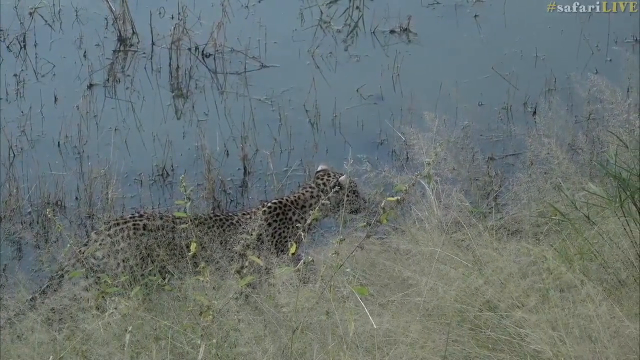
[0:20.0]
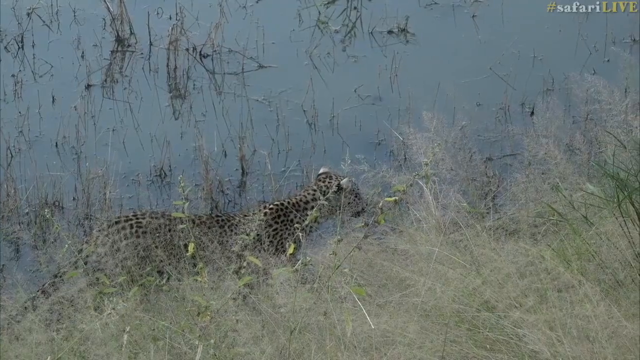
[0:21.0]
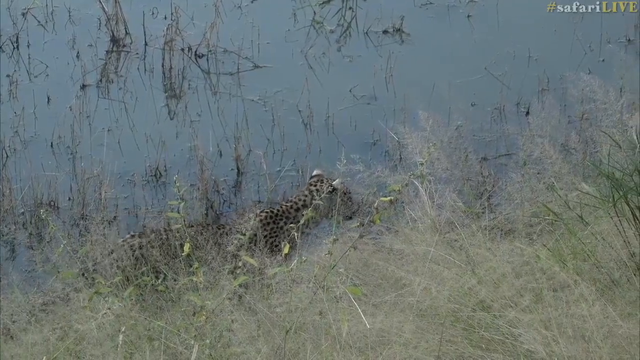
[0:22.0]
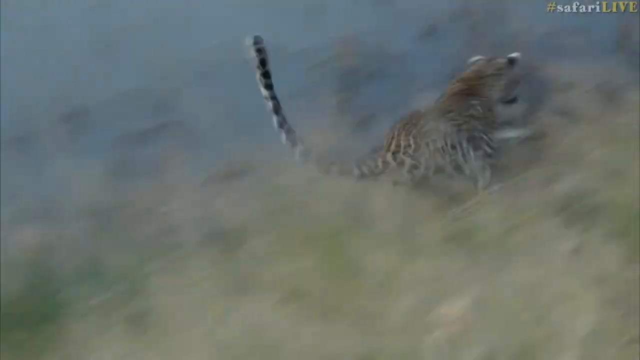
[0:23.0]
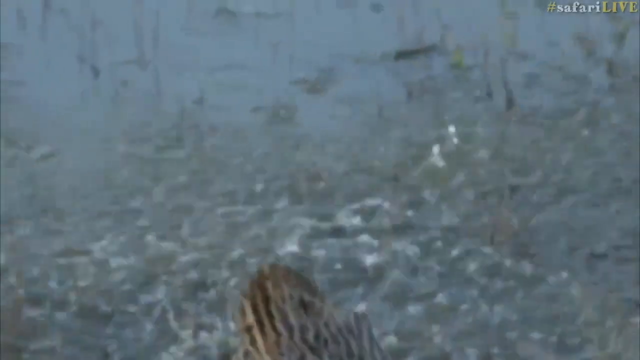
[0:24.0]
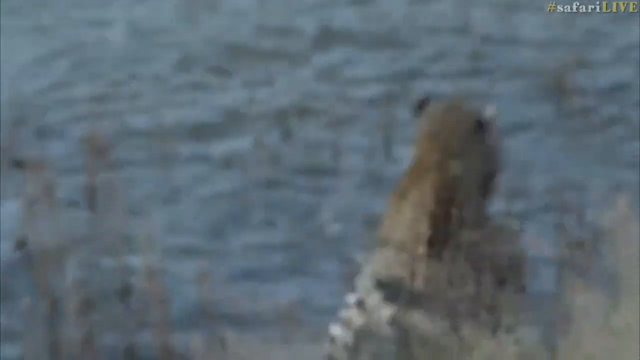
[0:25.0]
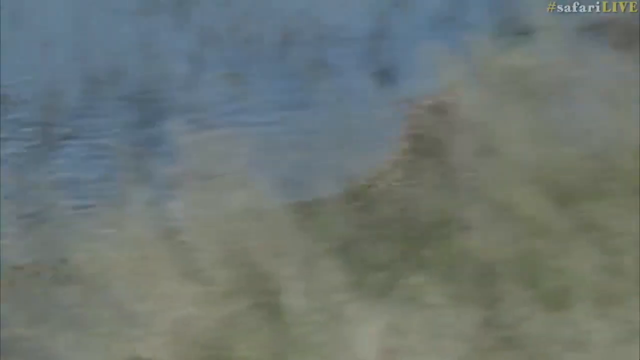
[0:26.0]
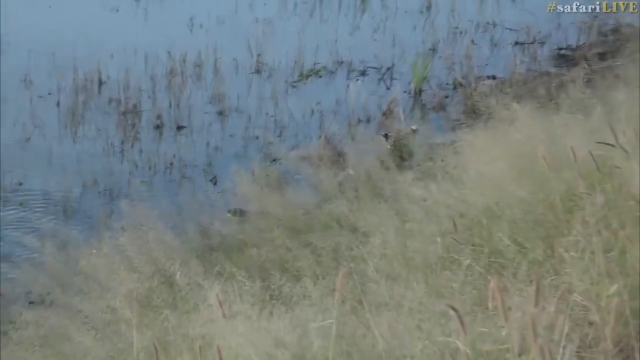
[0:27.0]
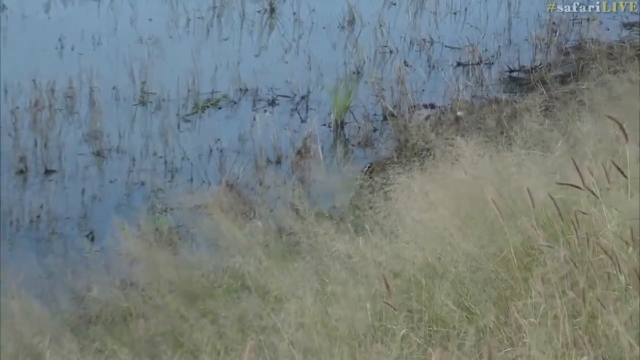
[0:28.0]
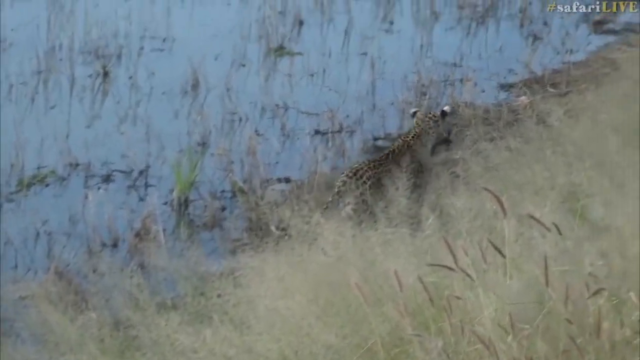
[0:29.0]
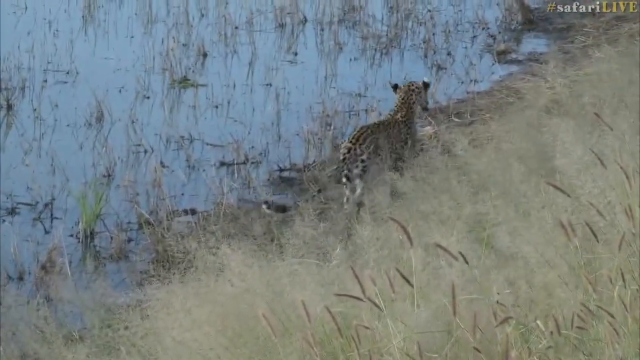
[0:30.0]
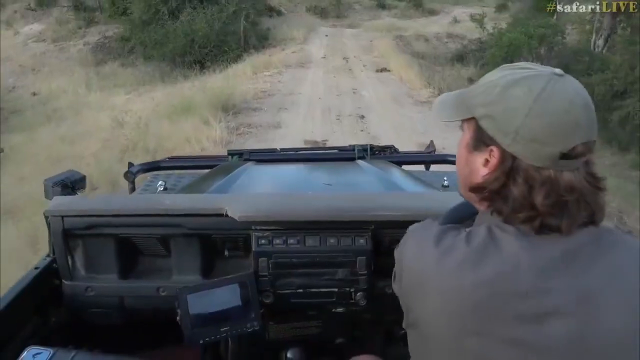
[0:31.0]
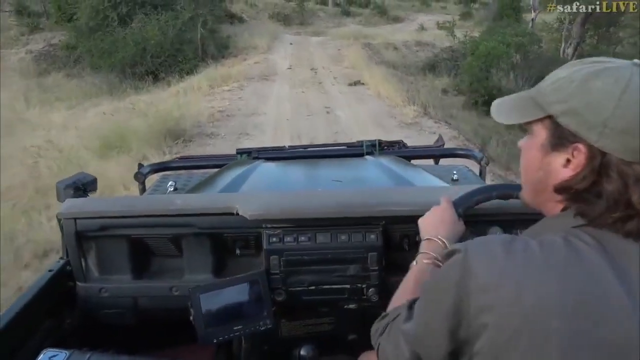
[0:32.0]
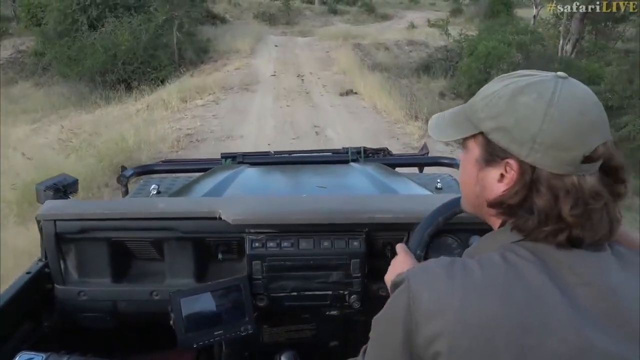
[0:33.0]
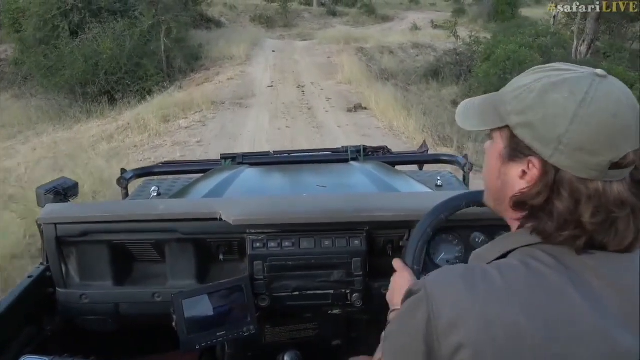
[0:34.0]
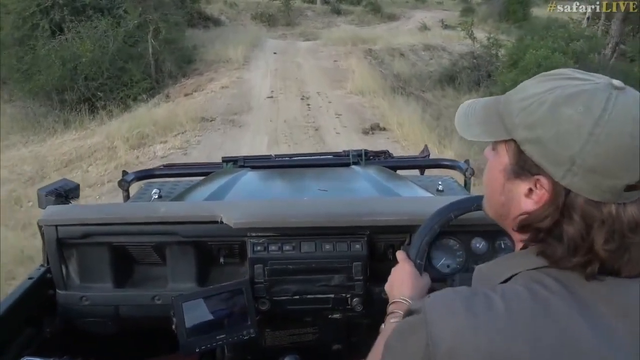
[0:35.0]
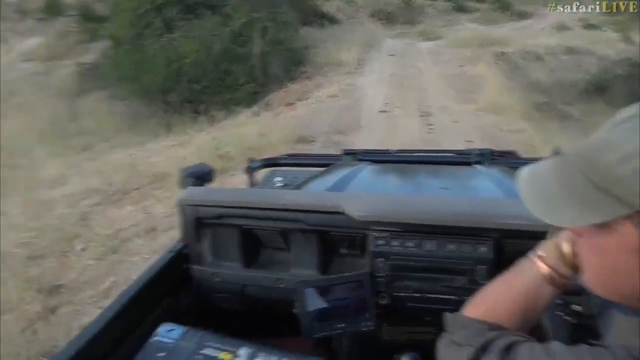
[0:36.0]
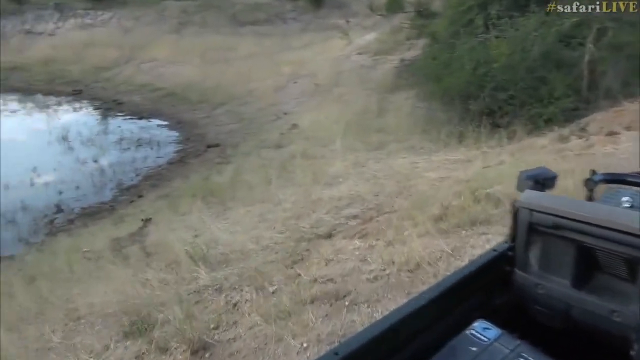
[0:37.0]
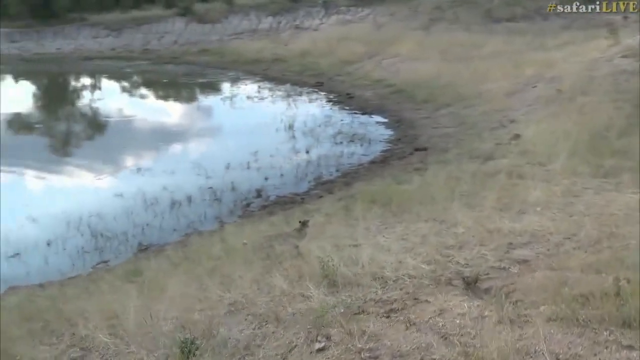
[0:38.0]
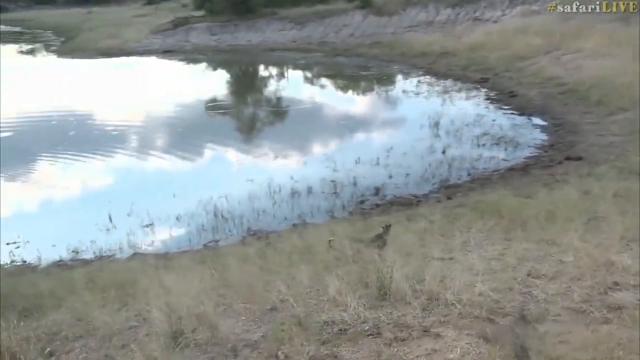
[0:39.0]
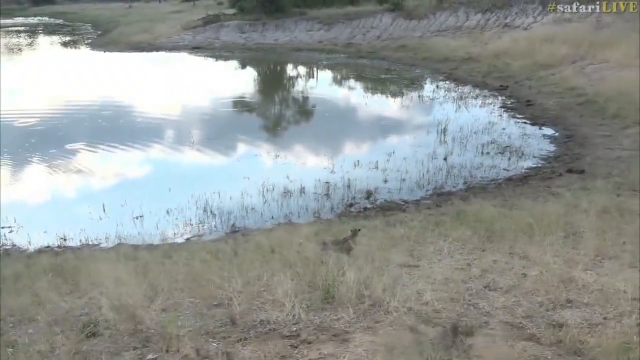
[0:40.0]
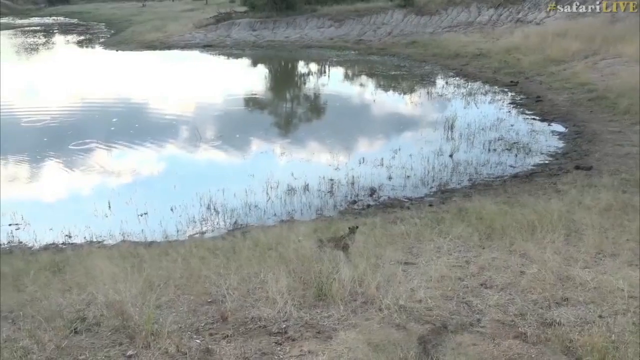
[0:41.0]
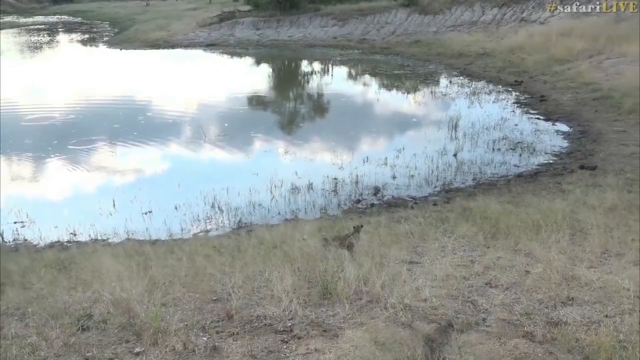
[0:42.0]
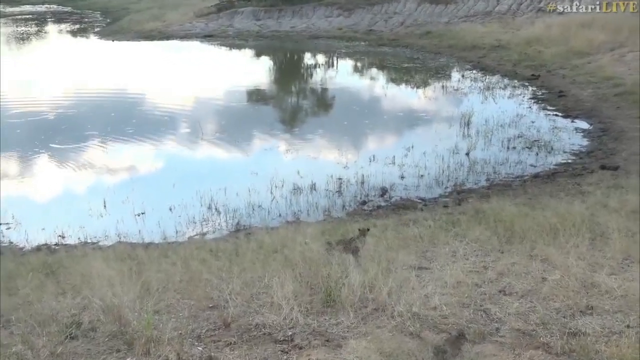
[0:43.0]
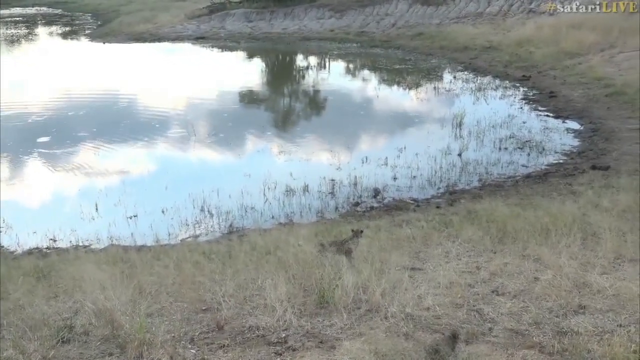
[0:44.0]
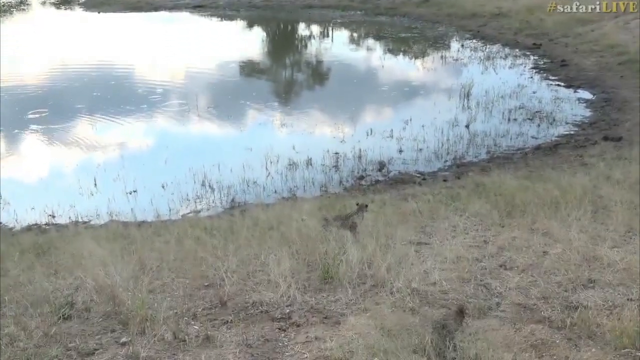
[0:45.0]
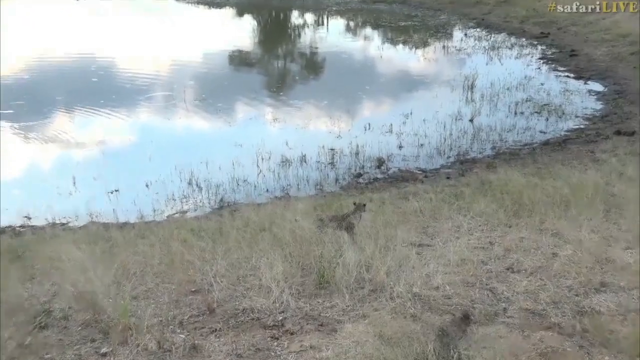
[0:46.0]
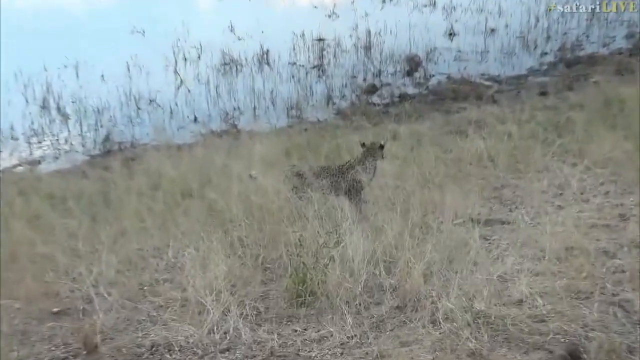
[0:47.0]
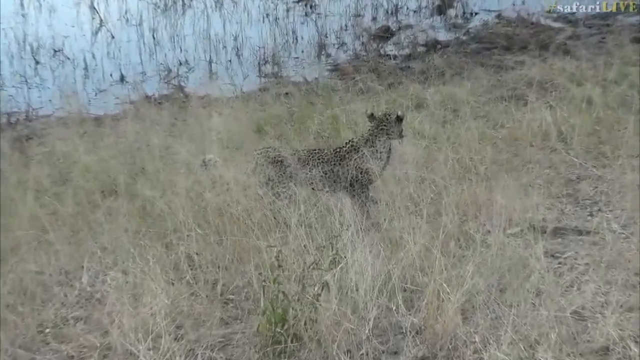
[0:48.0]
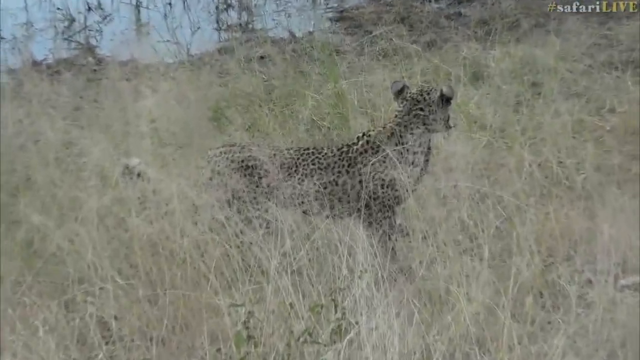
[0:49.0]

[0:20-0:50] A cheetah jumps and runs fast into the water at high speed to catch a fish. A tour guide in his work uniform, a brown cap and brown clothes, drives along the jungle, looking toward the river where the cheetah is as he drives. The camera focuses again, slowly zooming in on the cheetah next to the river and staying focused closely on what is happening in the river. The man driving the car is clearly visible. It is daytime. He drives on a dust or gravel road, with trees beside him and brown grass. He seems to be traveling with someone who is busy taking a video or pictures.